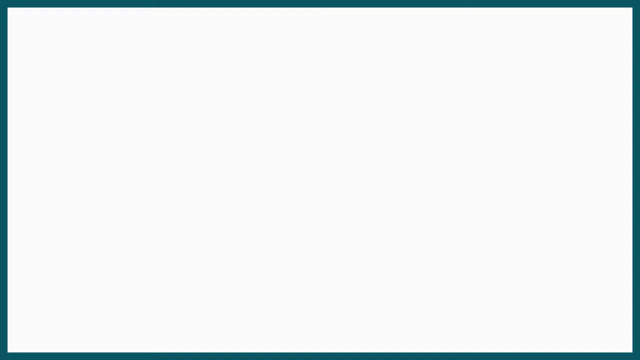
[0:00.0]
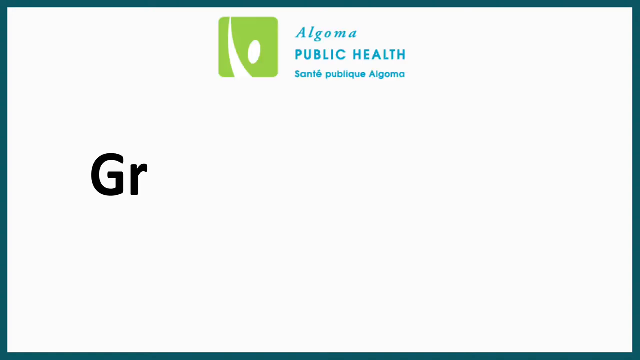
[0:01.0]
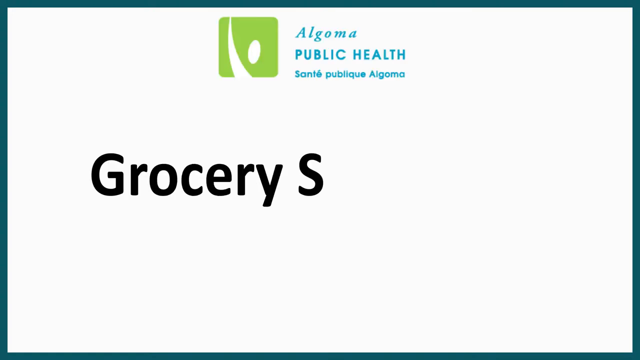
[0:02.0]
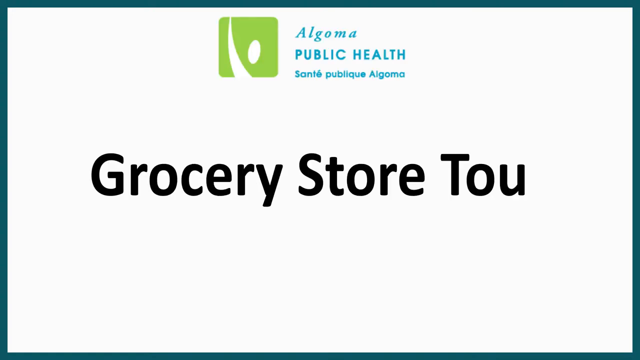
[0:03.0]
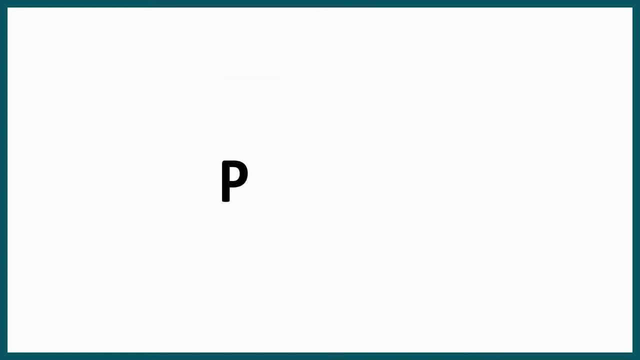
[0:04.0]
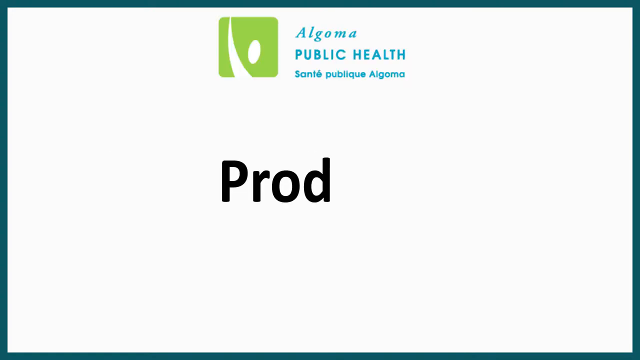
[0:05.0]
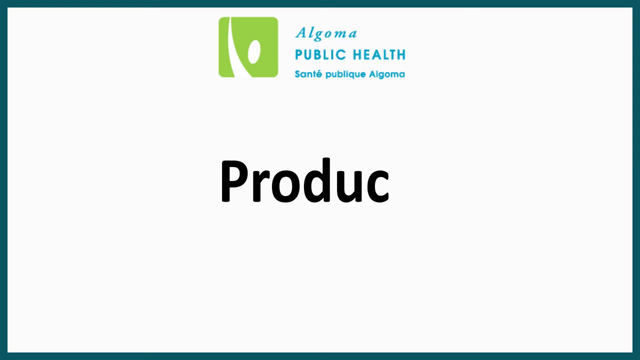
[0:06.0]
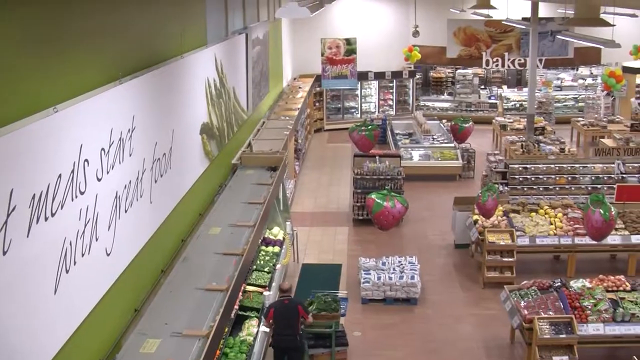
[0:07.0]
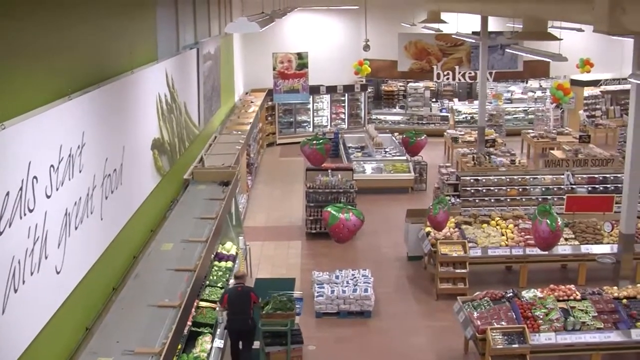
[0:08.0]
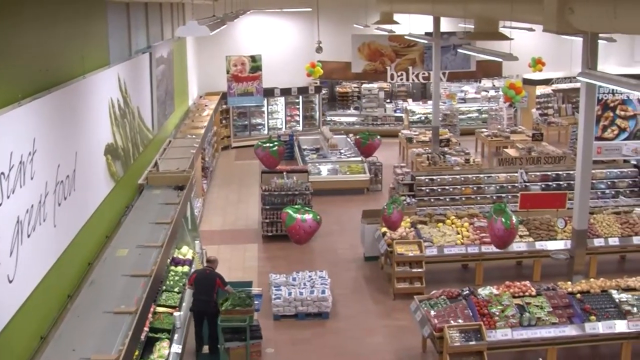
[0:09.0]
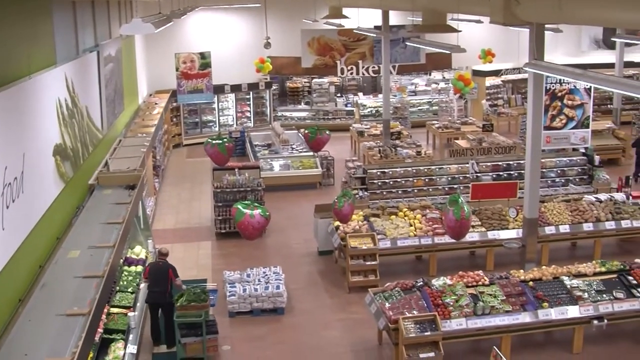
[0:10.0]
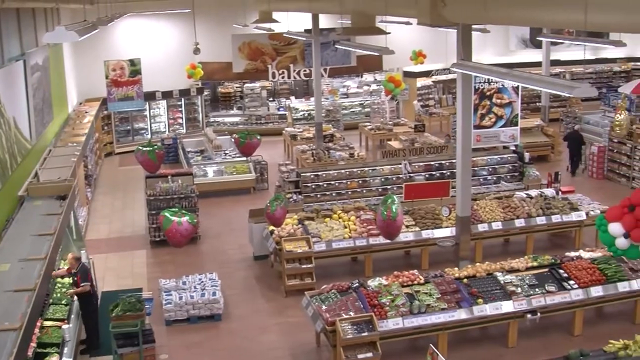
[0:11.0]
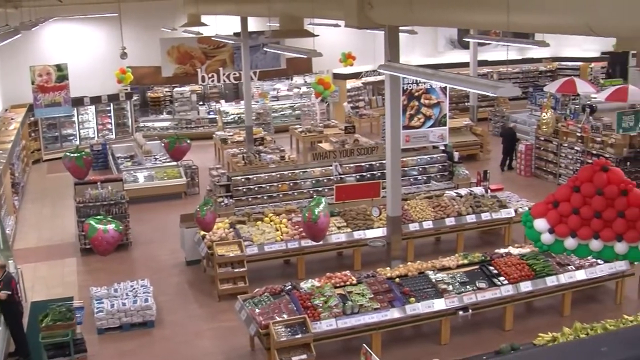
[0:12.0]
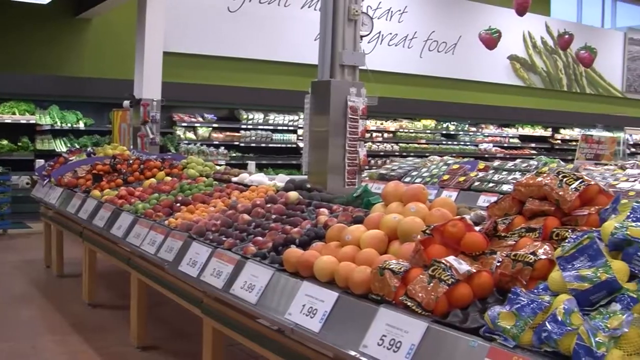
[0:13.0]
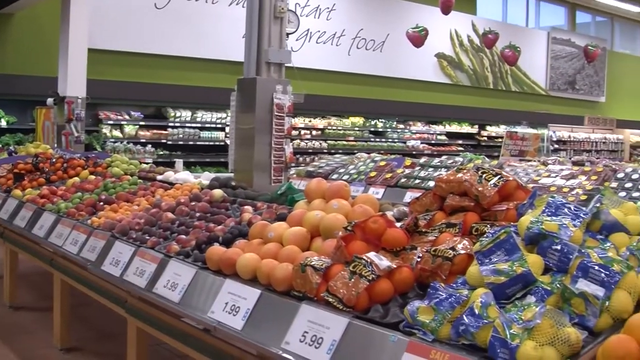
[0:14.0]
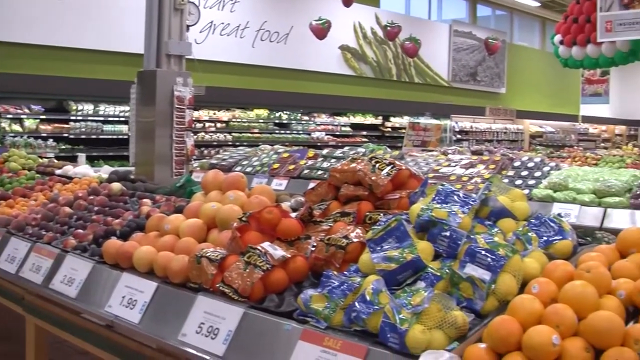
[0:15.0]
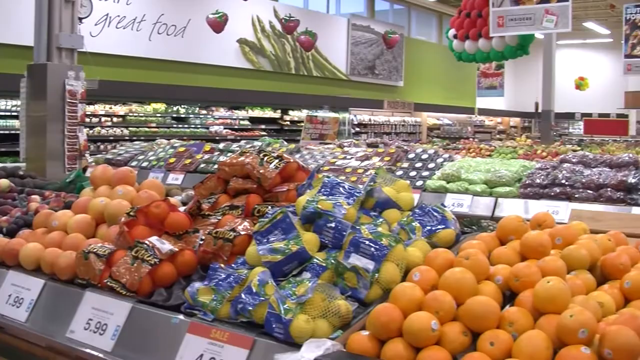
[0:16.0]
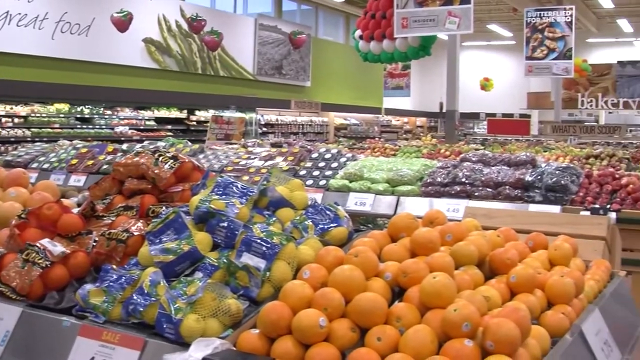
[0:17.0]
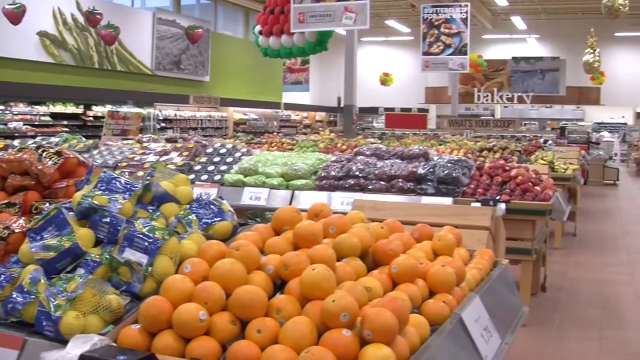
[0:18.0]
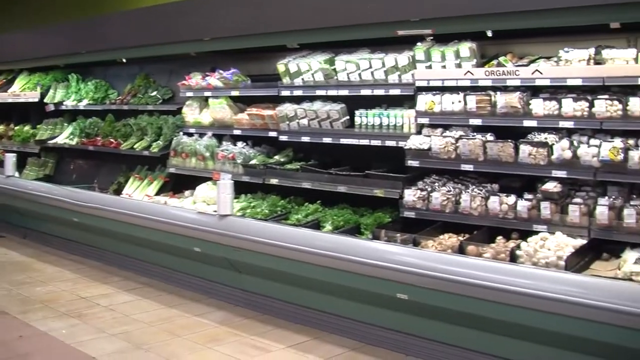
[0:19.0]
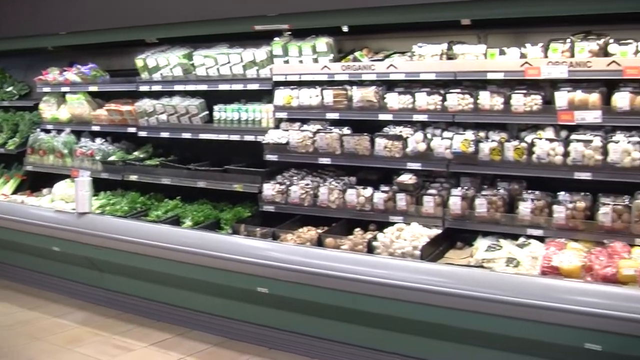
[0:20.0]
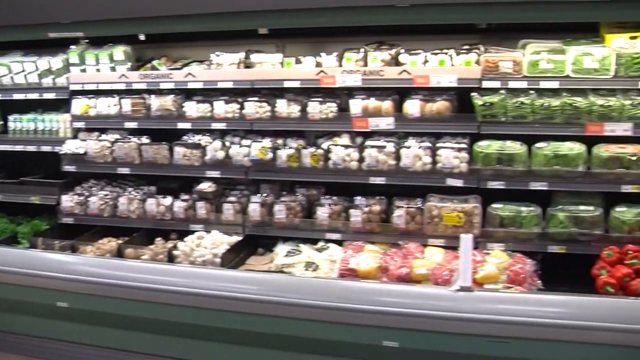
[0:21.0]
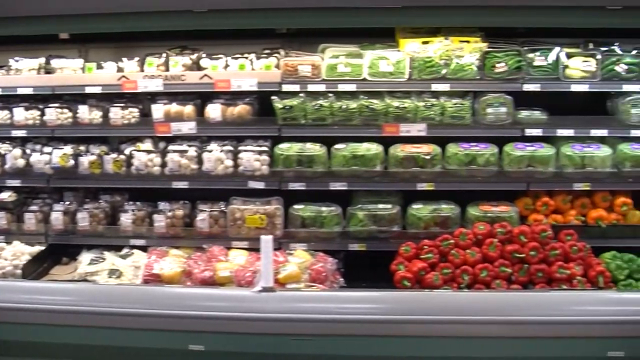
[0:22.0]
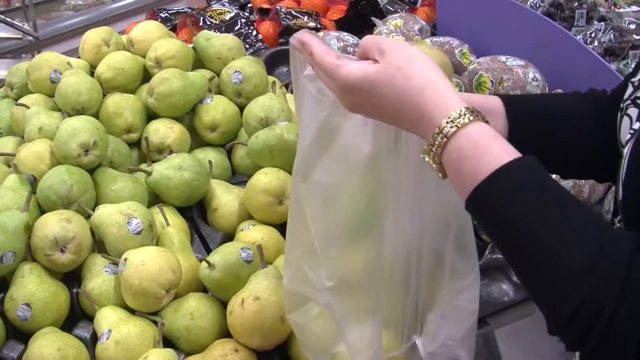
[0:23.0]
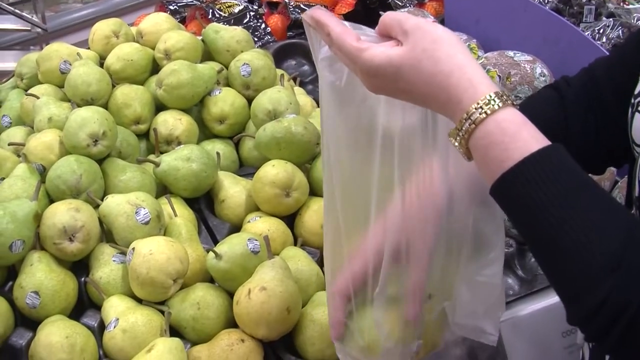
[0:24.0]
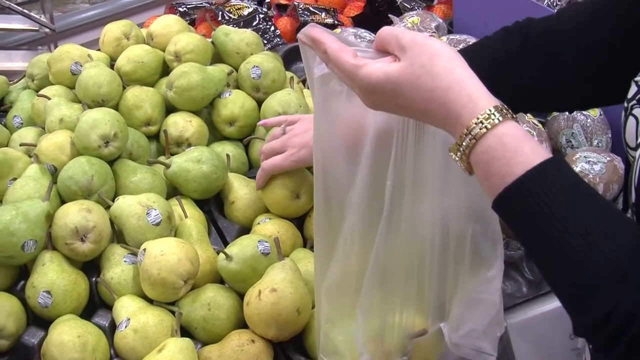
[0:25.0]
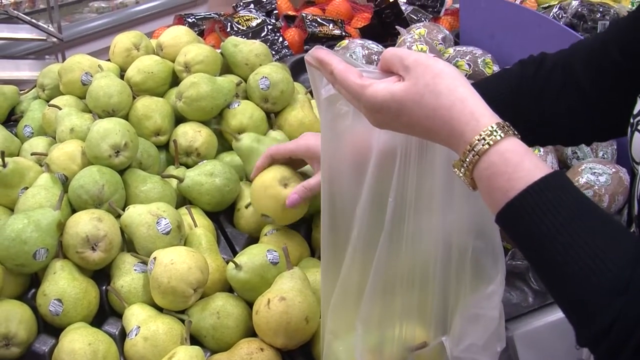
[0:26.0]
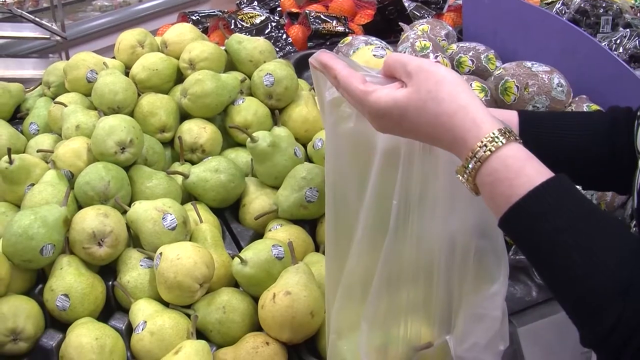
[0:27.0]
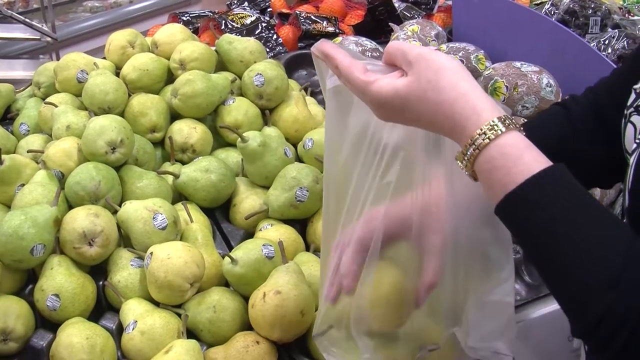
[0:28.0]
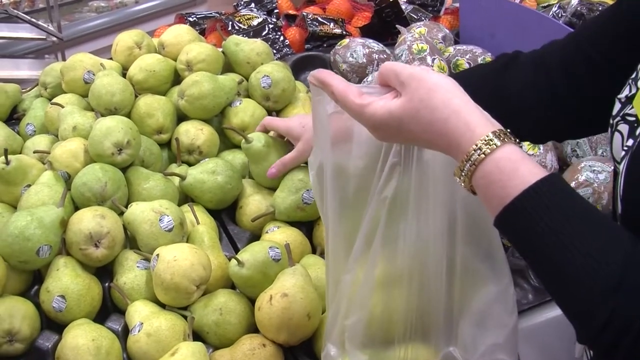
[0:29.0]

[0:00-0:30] The video opens on a white background bordered by a turquoise banner, and a logo appears at the center of the screen. On the center left is a yellow-greenish logo with a slight illustration of a slope rising to the left and a circle in the center. Next to it, bluish seafoam lettering reads "Algoma Public Health", and black lettering at the center of the screen reads "Grocery store tour". The view changes to another screen with black lettering that reads "Produce". Next comes an upper-angle view of a grocery store. An individual at the bottom center of the screen walks next to a cart, with produce shelving on the left and a couple of small crates and produce items in the center. On the right are a number of other shelves with produce items, and strawberry balloons are tied up in a number of places. In the background there is a chilled, refrigerated section, with bins in the center. At the top of the screen on the right, white lettering reads "Bakery", above a variety of bakery items and shelving at the top right. The camera pans over various produce aisles and presentation areas. A close-up shows produce aisles with oranges and lemons, followed by more produce aisles with various greens, mushrooms, carrots and bell peppers. An over-the-shoulder shot shows a woman in a long-sleeve blouse and a gold watch placing a pear from the produce aisle into a plastic bag.